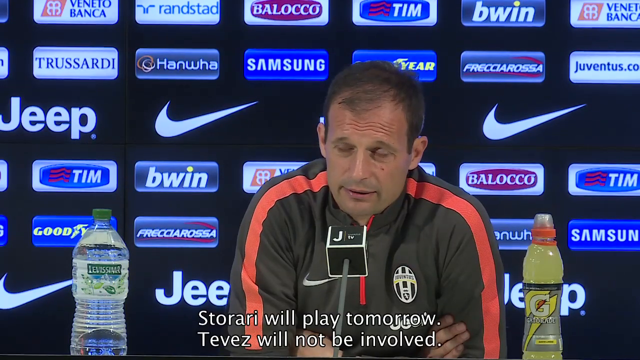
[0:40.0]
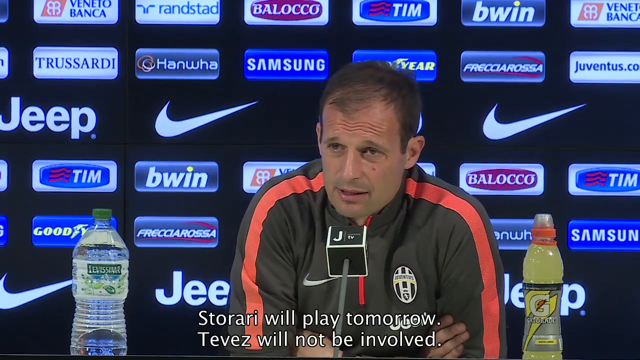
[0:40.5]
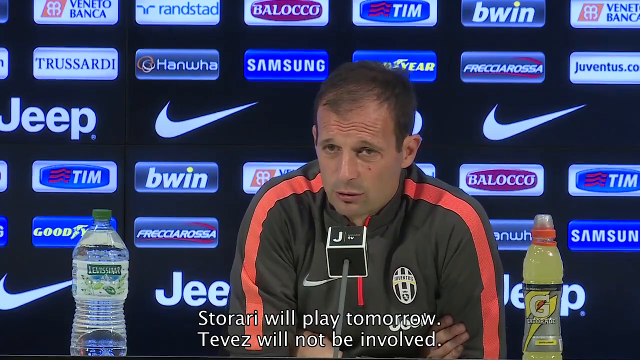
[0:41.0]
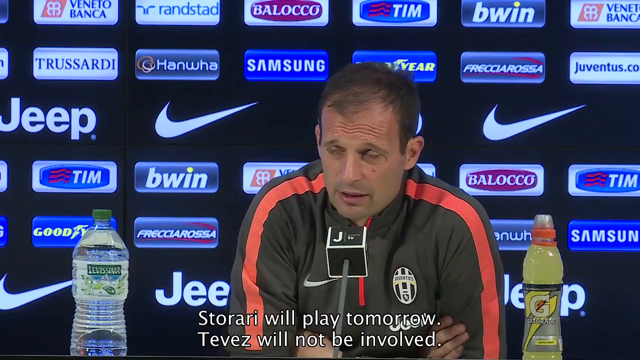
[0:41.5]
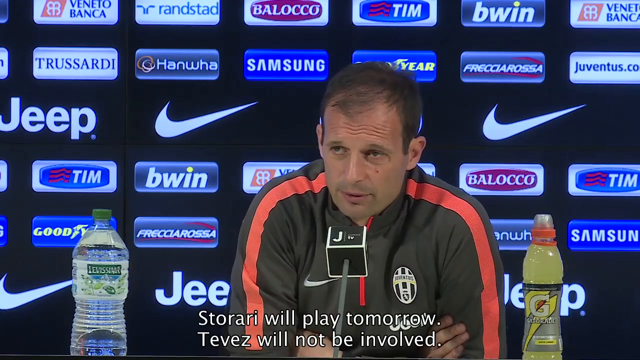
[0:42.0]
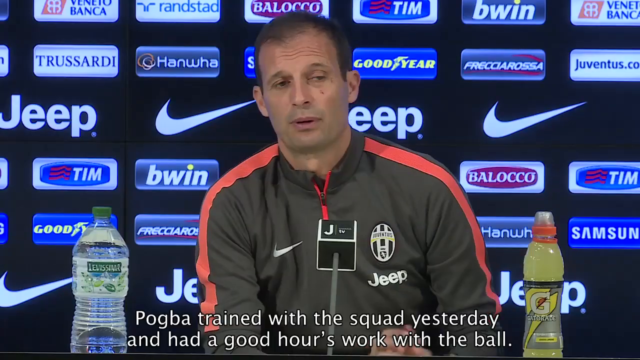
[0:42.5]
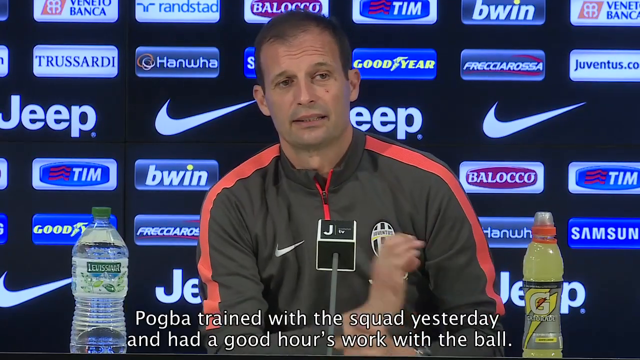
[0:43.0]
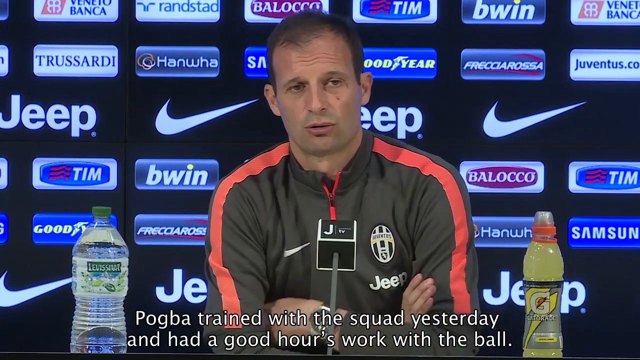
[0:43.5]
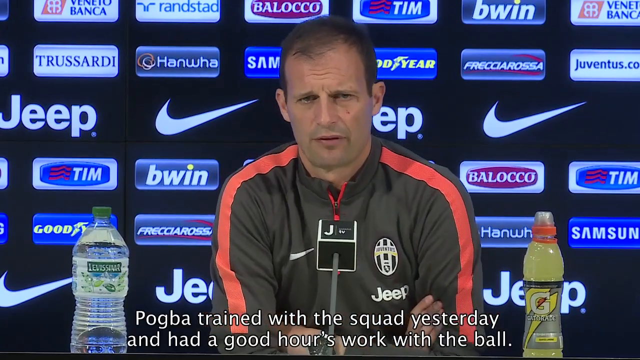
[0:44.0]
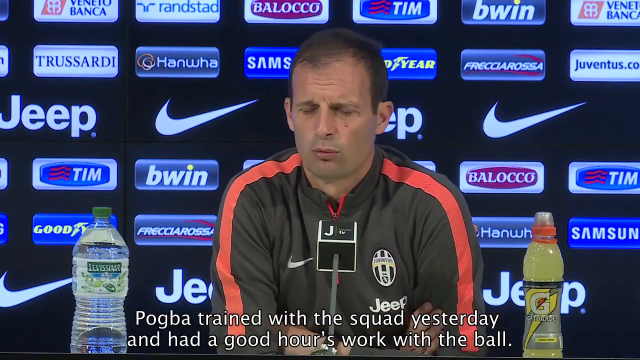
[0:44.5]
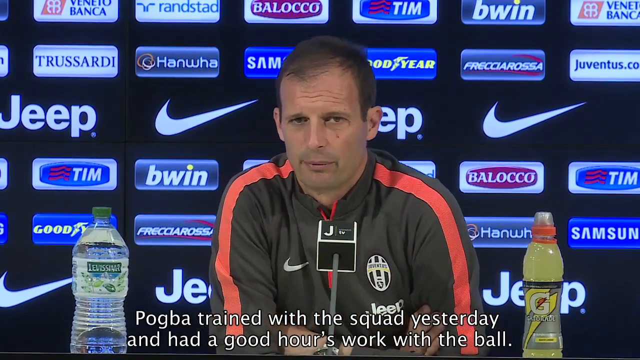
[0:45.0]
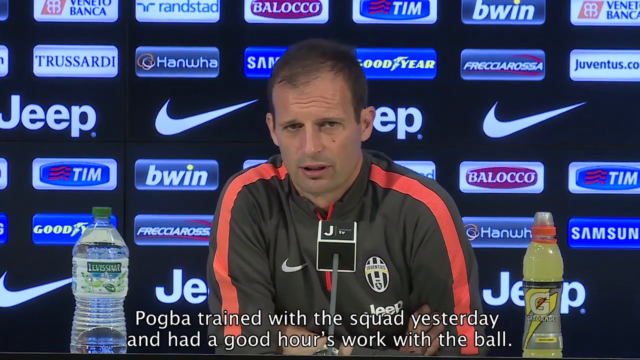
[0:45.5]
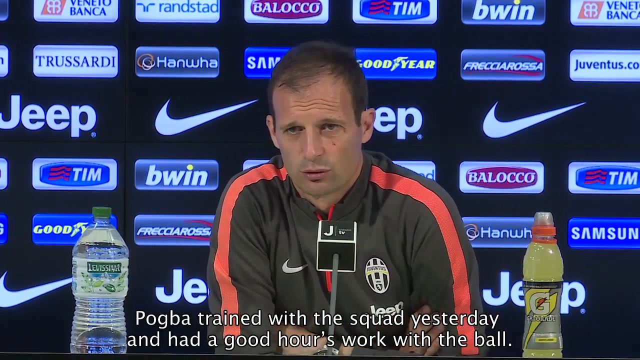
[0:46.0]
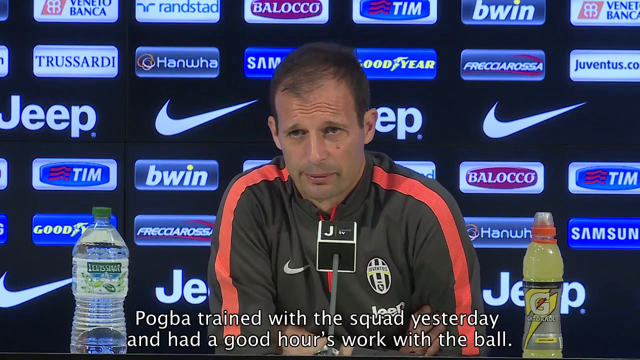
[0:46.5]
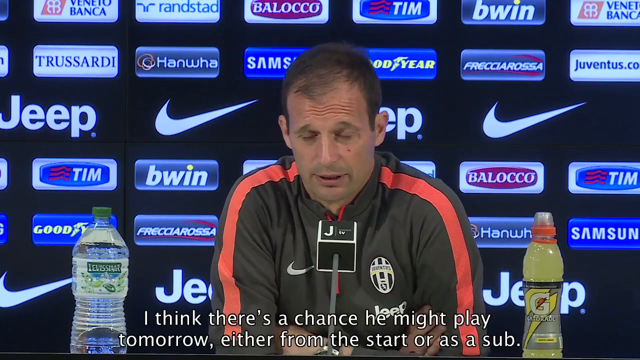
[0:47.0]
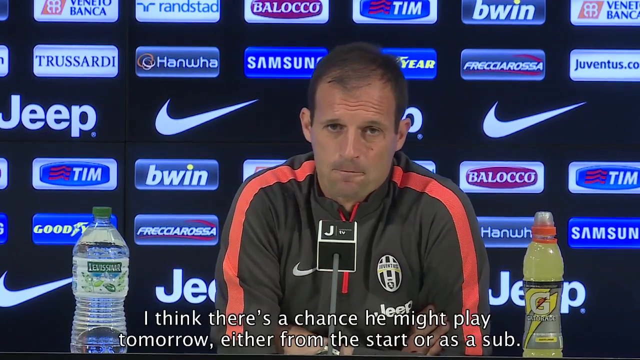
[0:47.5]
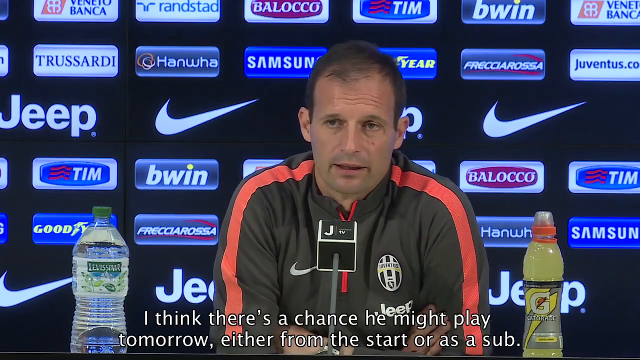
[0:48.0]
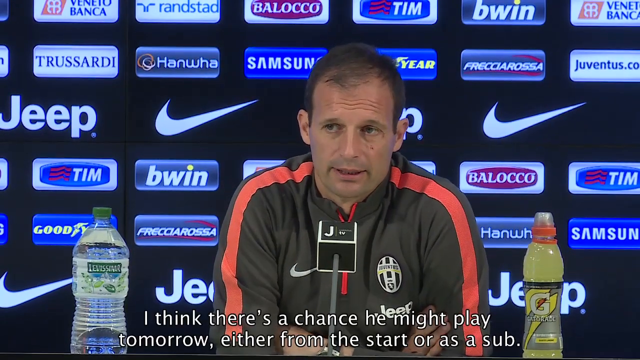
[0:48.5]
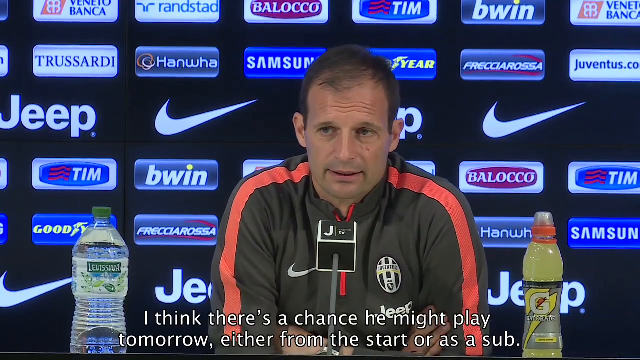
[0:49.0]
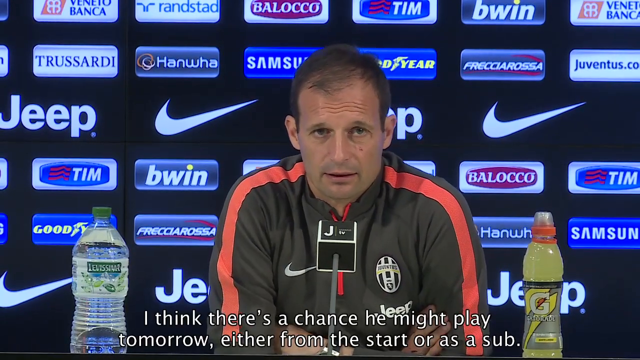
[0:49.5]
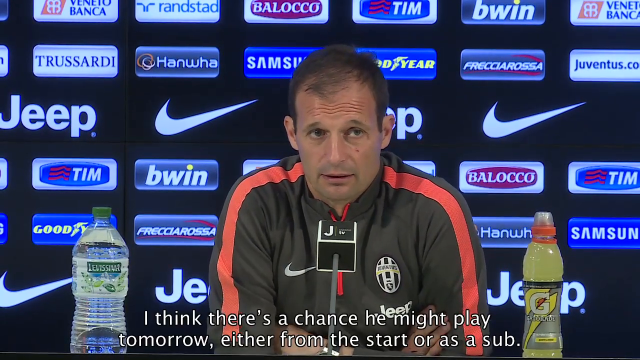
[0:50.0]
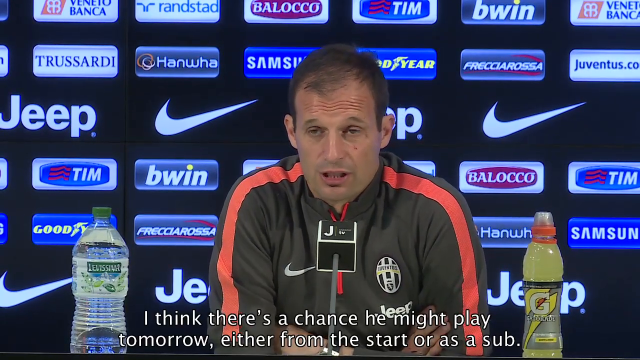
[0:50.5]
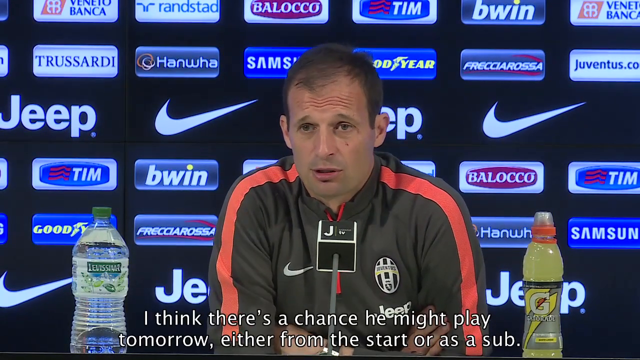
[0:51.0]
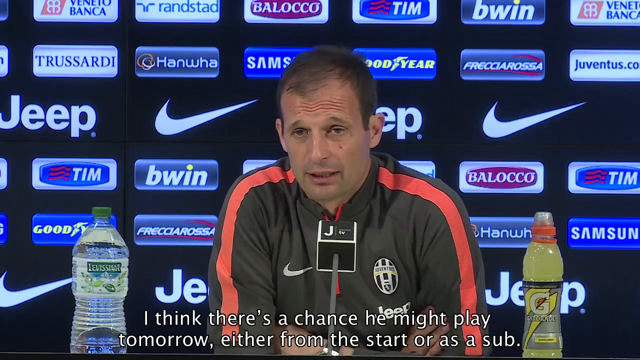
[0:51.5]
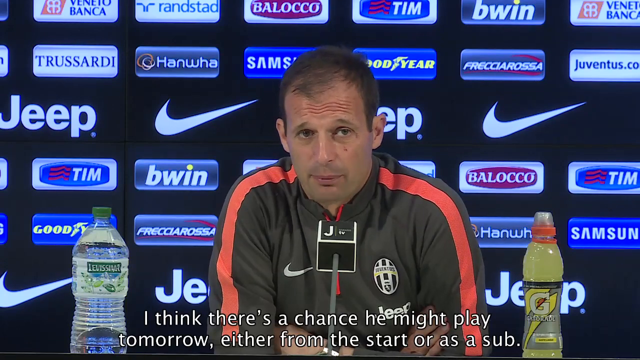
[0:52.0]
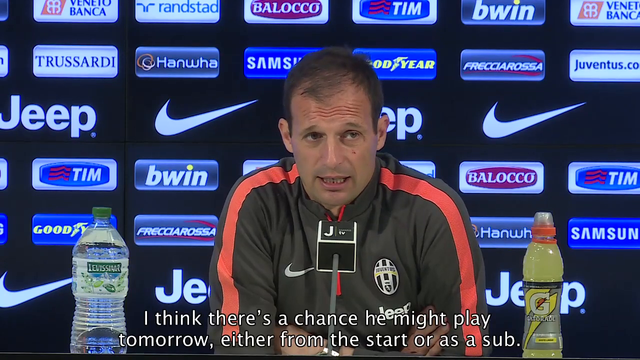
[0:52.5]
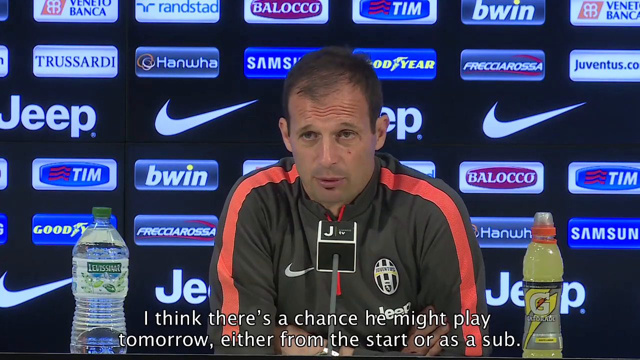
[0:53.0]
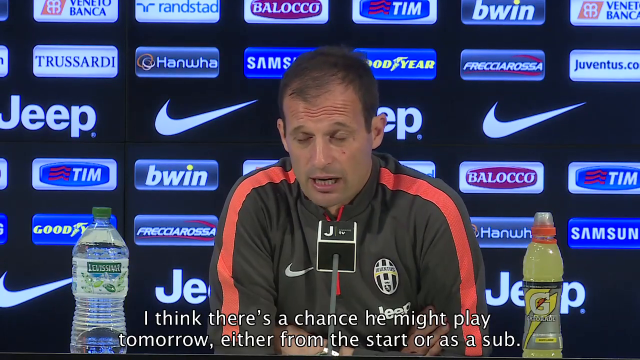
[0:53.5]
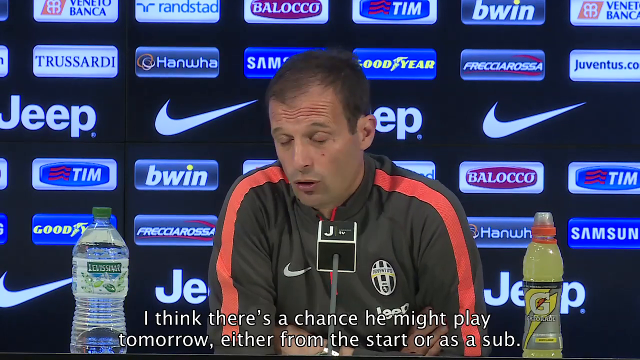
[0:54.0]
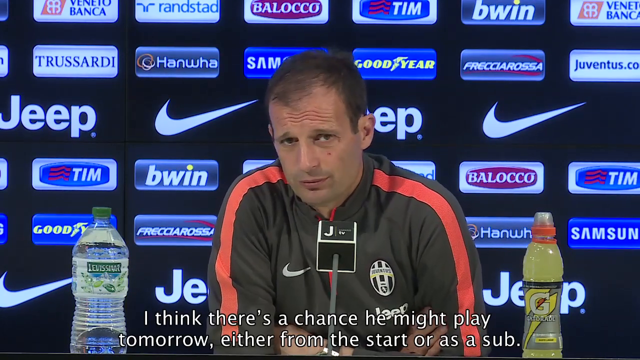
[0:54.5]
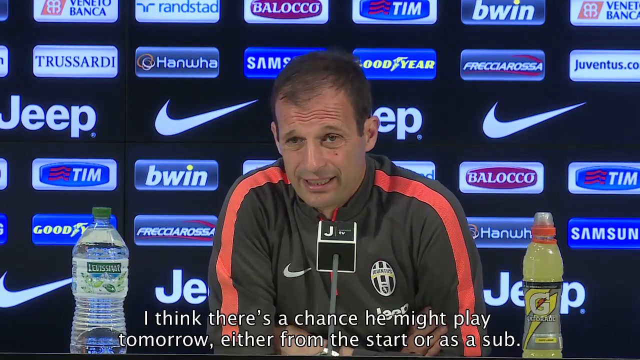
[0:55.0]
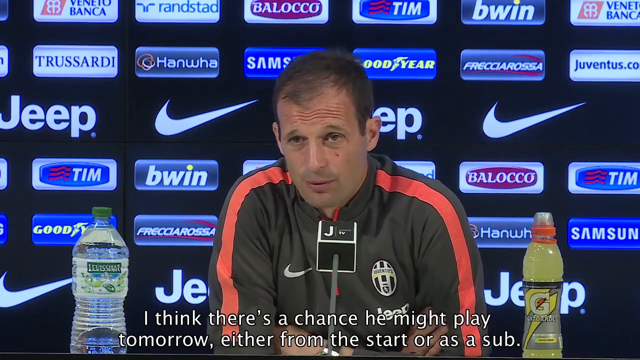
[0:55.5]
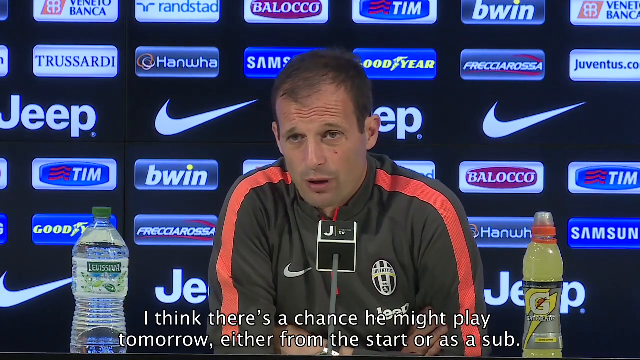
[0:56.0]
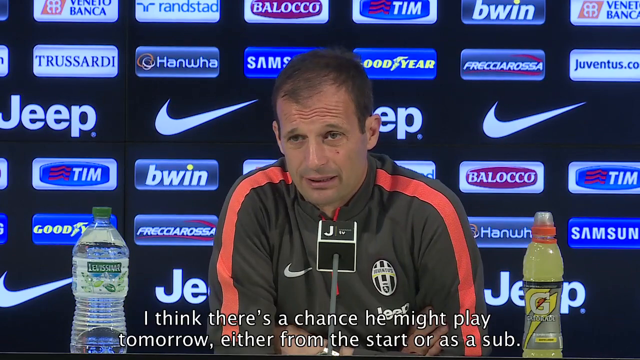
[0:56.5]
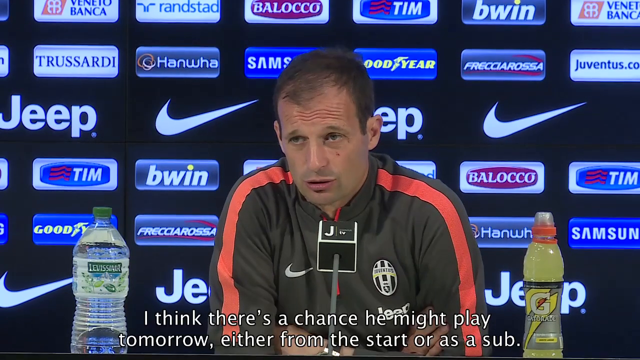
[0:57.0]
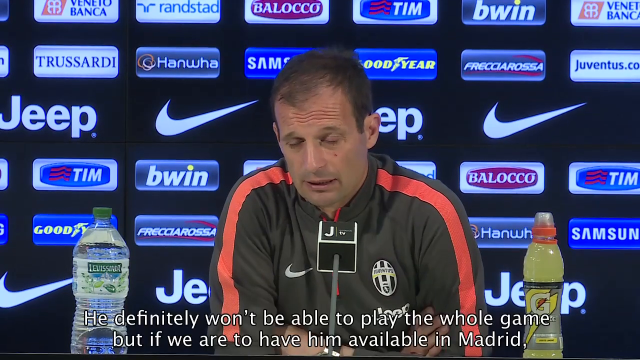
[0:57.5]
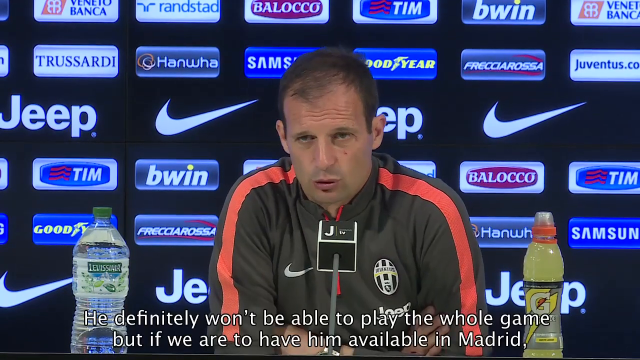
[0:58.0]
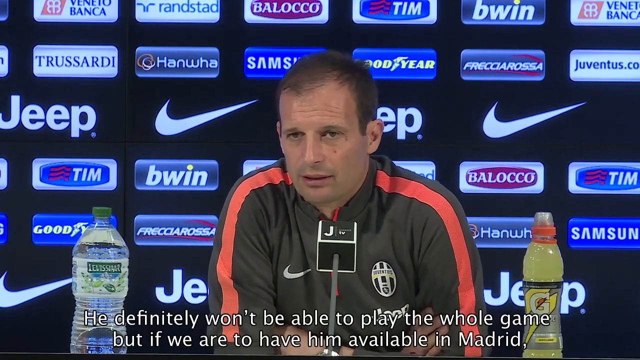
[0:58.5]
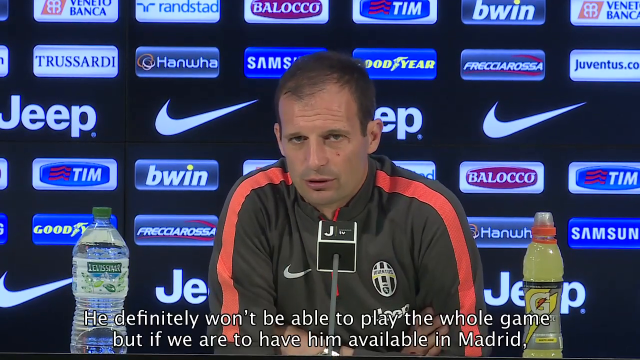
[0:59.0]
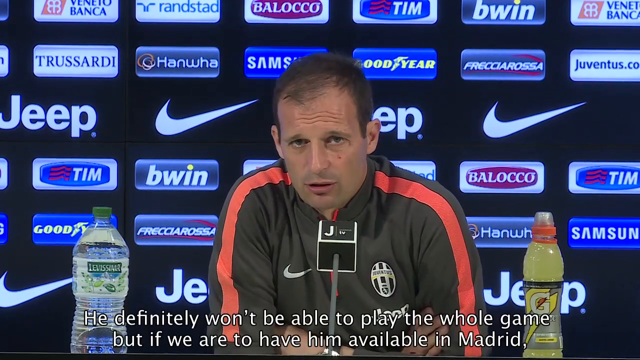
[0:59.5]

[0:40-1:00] Behind the man is a very dark blue or black wall displaying sponsors. A white Nike sign, probably one of the largest sponsors, is on the wall, and Nike also appears on the right chest of the top the man wears. Another large sponsor in bold white letters on the wall is Jeep. The man continues speaking and says, "Pogba trained with the squad yesterday and had a good hours work with the ball. I think there is a chance he might play tomorrow either from the start or as a sub." He continues, "he definitely won't be able to play the whole game, but if we are to have him available in Madrid." Another sponsor on the wall behind the man, on a blue tab, reads "SAMSUNG" in white capital letters.